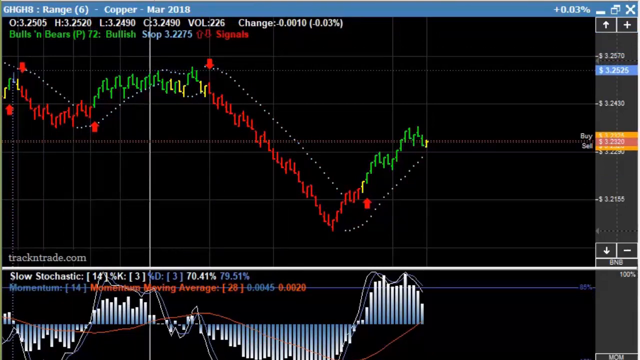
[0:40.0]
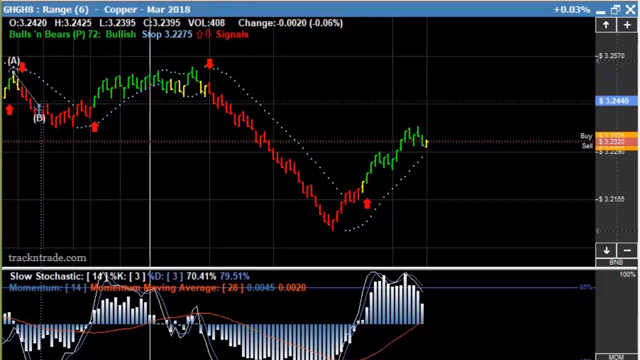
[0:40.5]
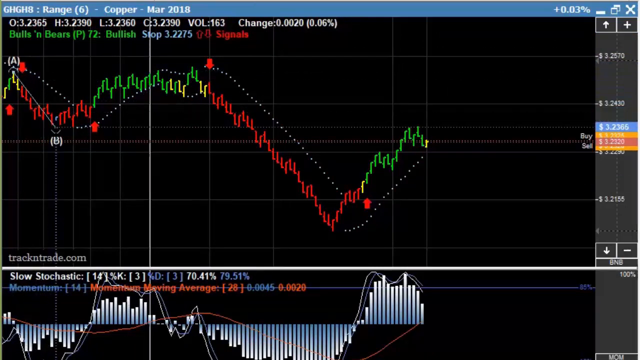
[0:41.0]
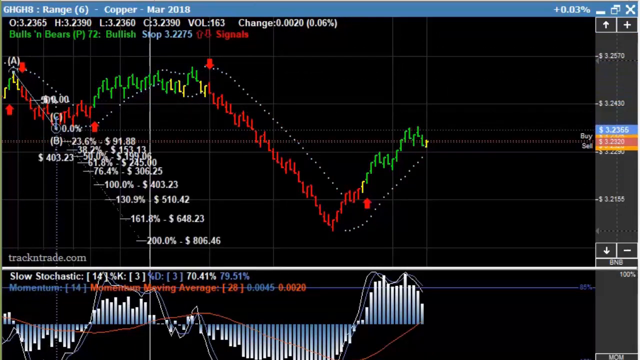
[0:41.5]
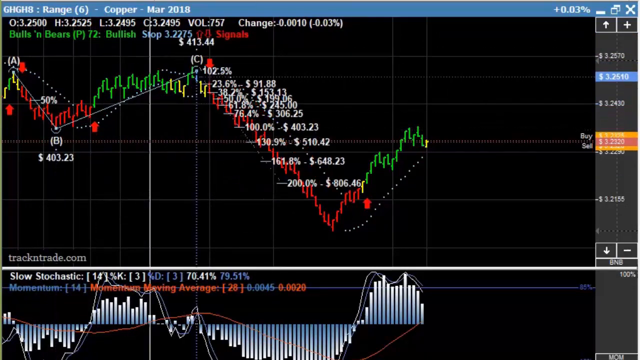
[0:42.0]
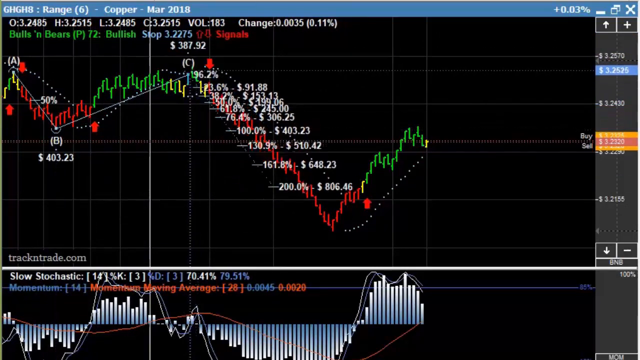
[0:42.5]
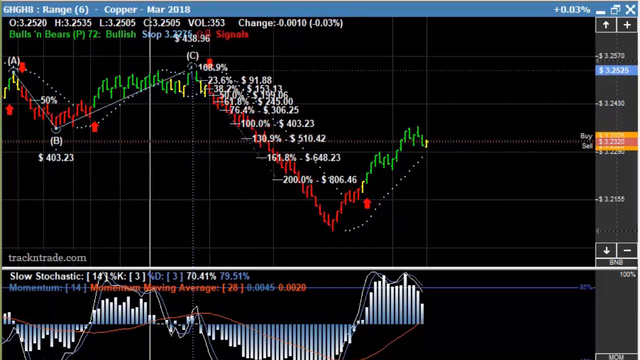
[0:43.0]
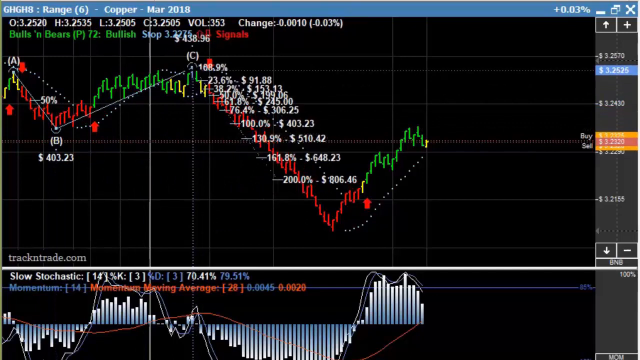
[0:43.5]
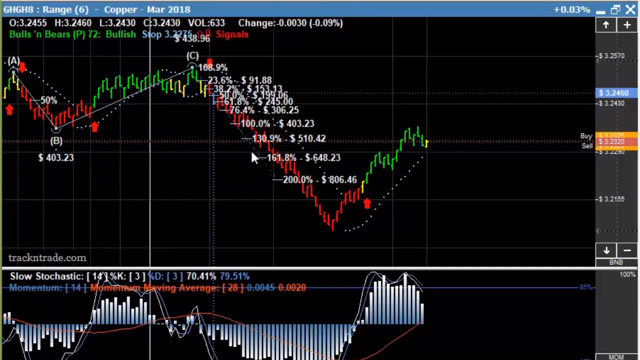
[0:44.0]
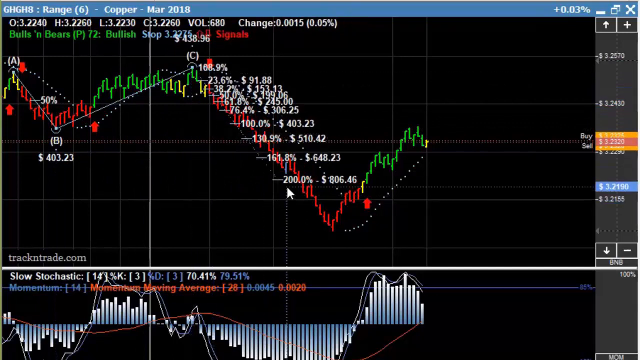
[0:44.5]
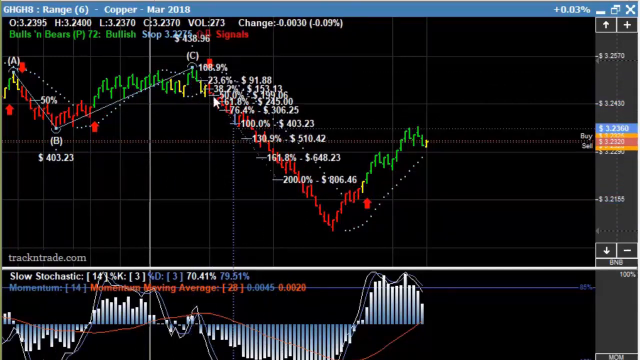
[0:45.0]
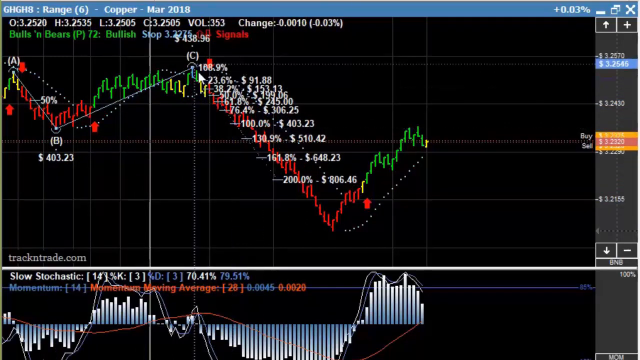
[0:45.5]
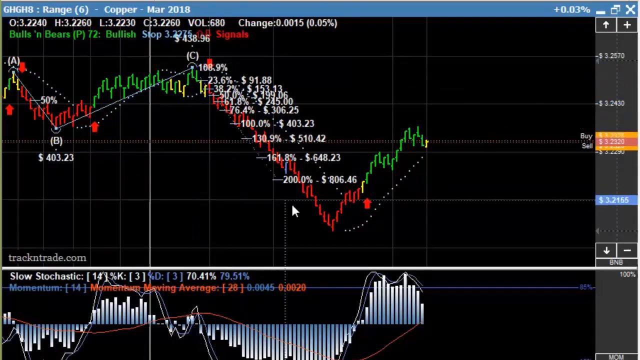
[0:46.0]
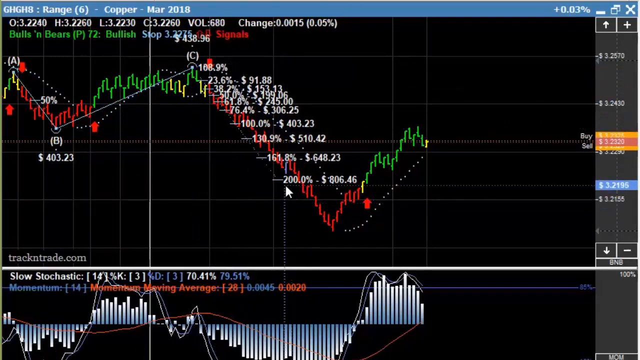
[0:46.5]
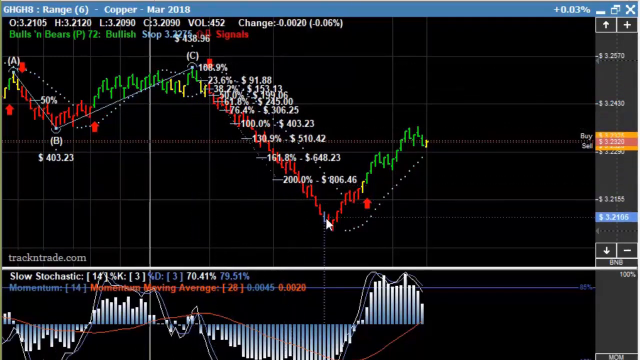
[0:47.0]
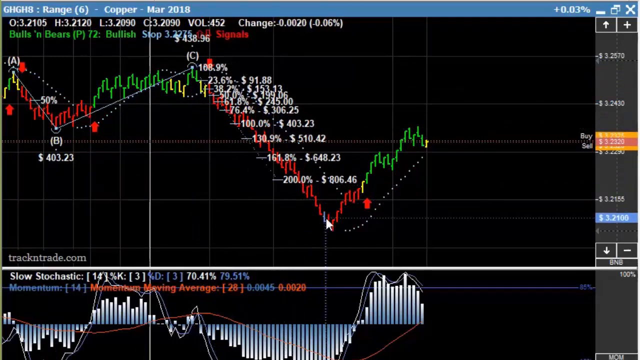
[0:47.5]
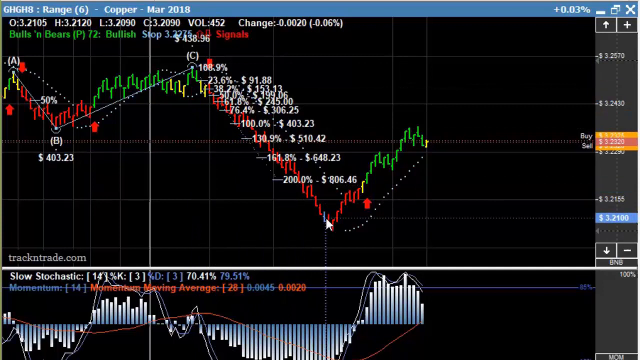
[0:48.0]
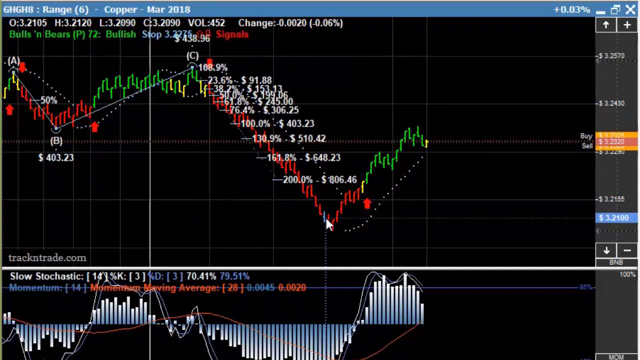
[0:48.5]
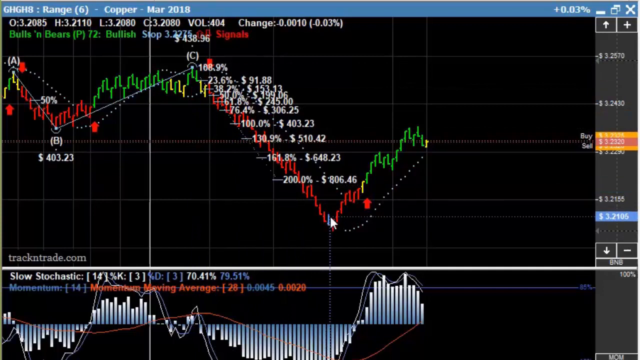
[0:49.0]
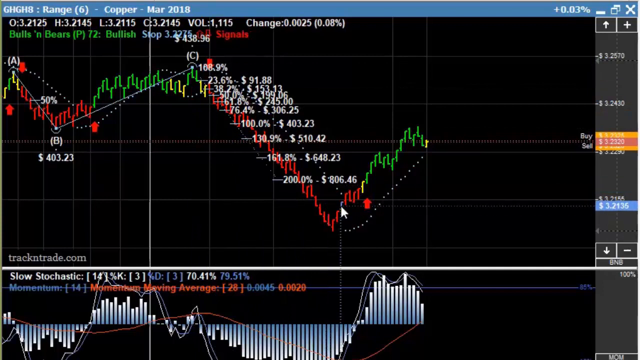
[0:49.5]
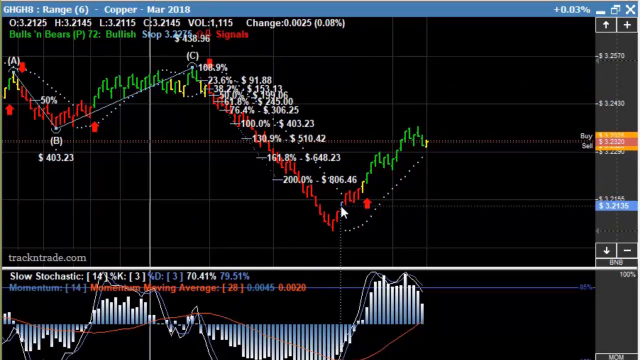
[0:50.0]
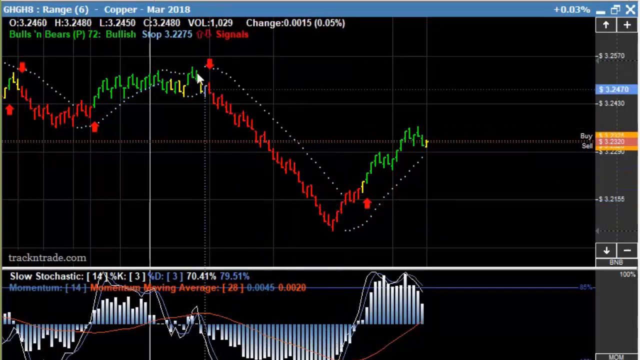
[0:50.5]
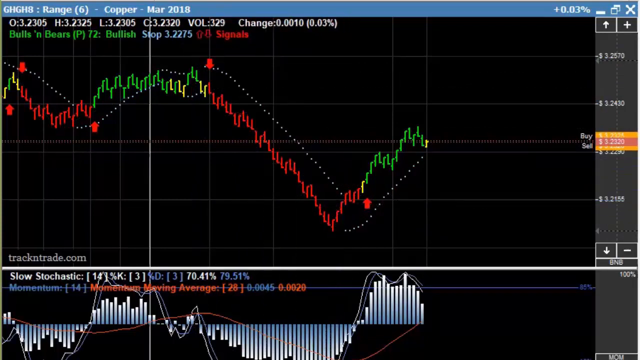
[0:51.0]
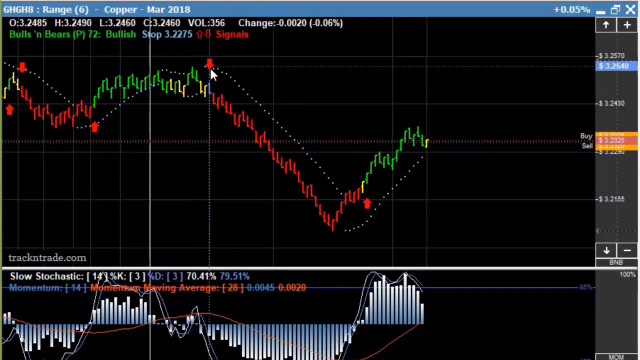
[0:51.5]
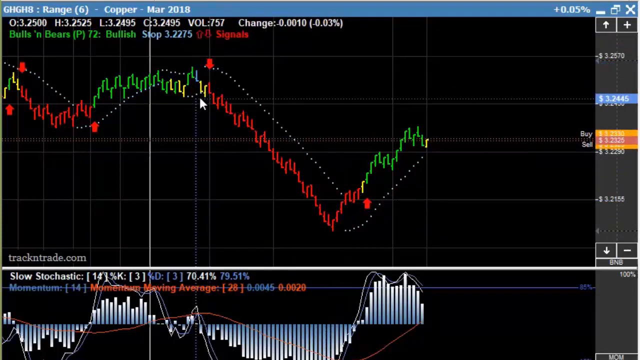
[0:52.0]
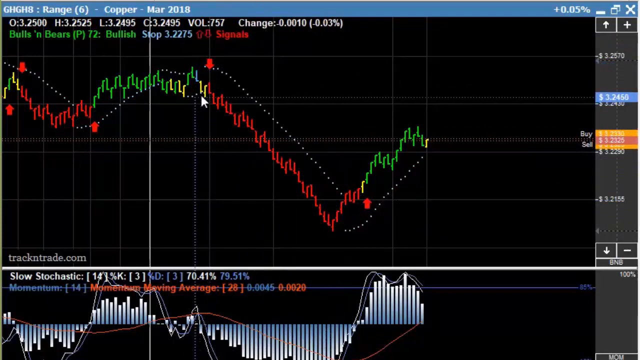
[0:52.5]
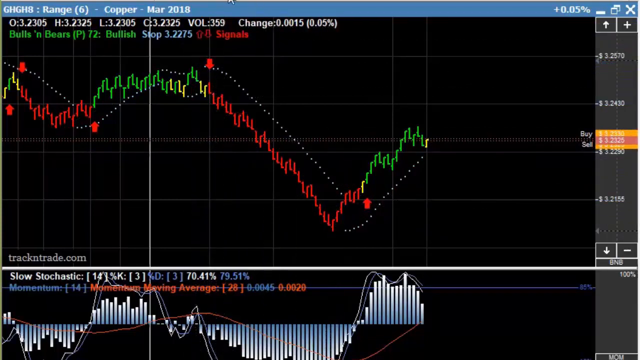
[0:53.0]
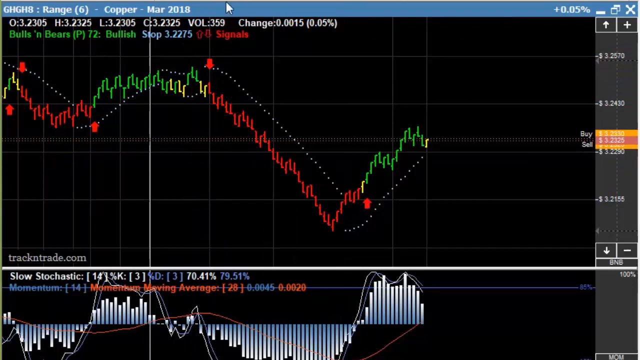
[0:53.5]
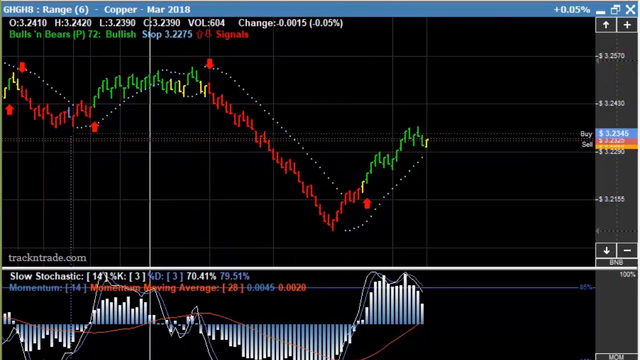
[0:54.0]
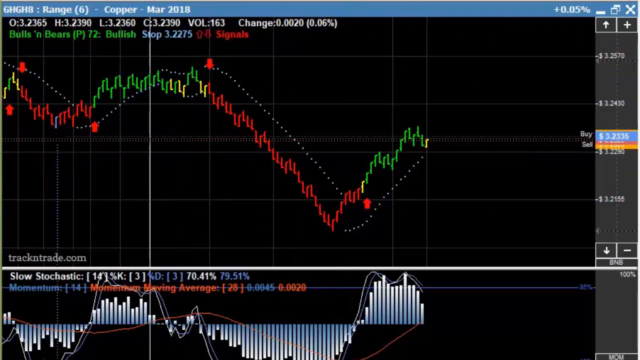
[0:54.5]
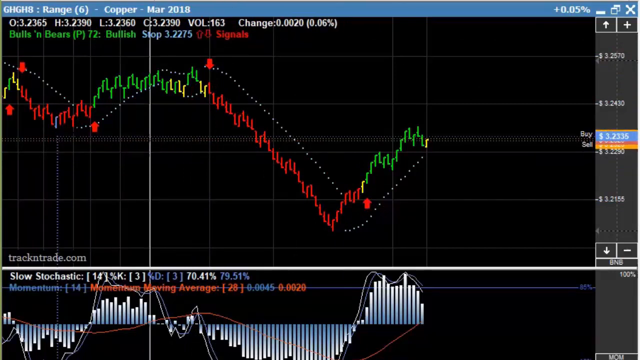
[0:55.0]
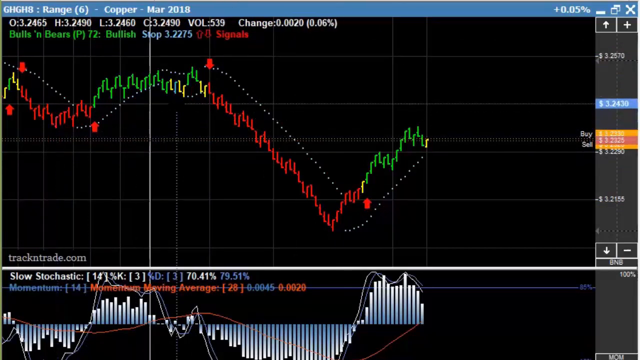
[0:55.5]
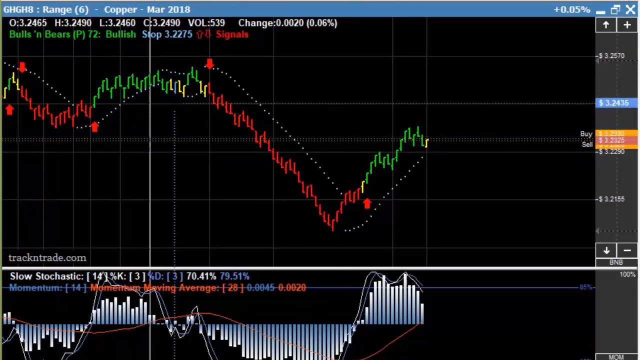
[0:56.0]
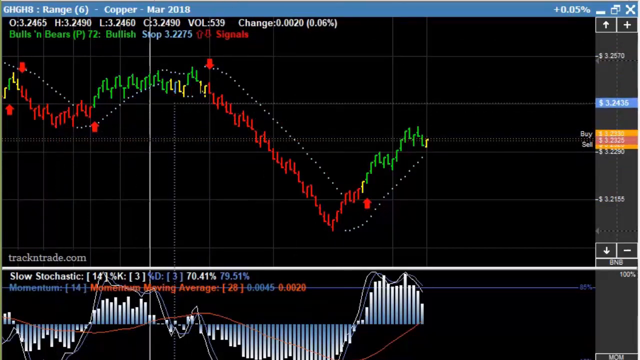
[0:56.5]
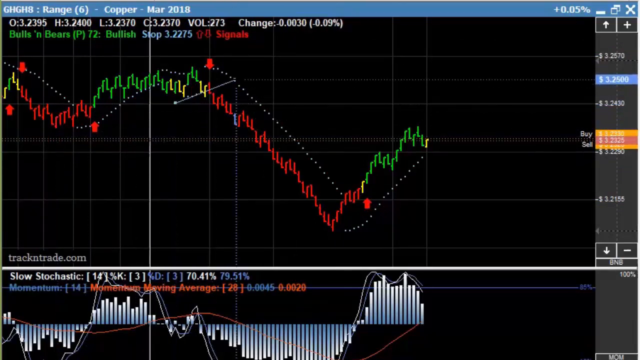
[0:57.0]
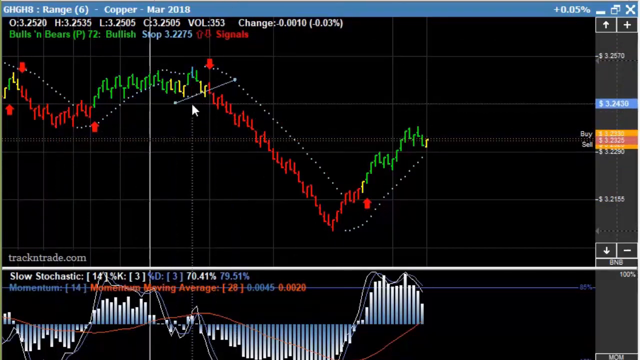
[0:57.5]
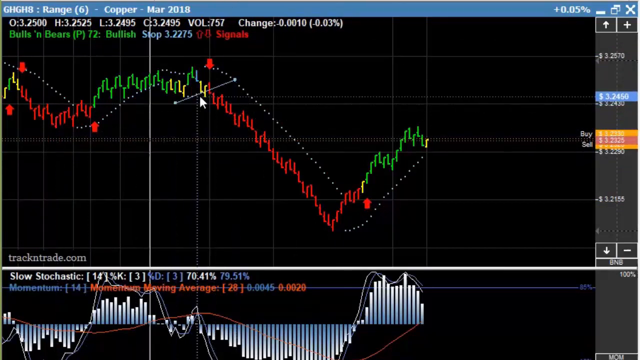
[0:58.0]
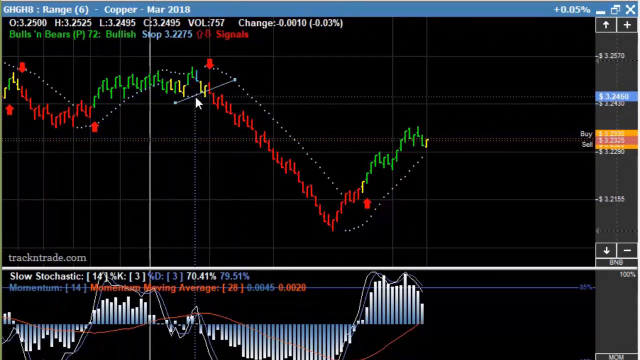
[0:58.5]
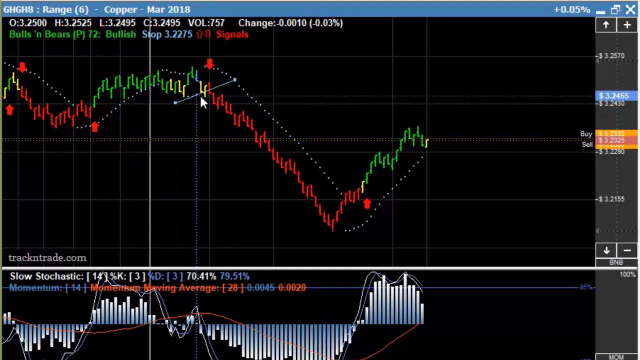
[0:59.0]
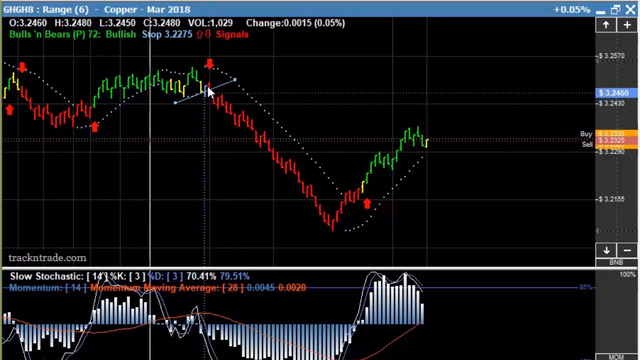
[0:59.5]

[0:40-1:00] The stock ticker profit and loss graph remains on screen as the mouse moves about, highlighting numbers across the top of the screen. Just below the blue bar, text reads "0.32505", then "H.32520L: 32490C: 32490VOL: 226 change: 0.0010 (0.003%)". As the mouse moves across, it highlights and pulls up a graph overlaid on the profit and loss ticker, which makes the number values nearly impossible to decipher. The numbers are stacked on one another like a staircase, with apparently 10 rows. The mouse moves up and down this staircase of numbers, and a vertical line follows the mouse to show the position on the profit and loss graph. The profit and loss stock pricing graph fills two thirds of the screen, and on the right side a roughly one-inch-wide vertical bar shows more pricing information.